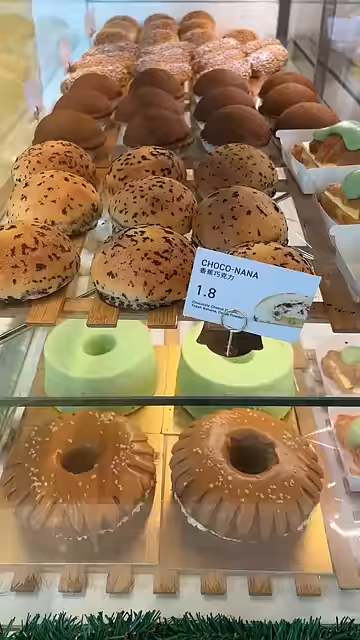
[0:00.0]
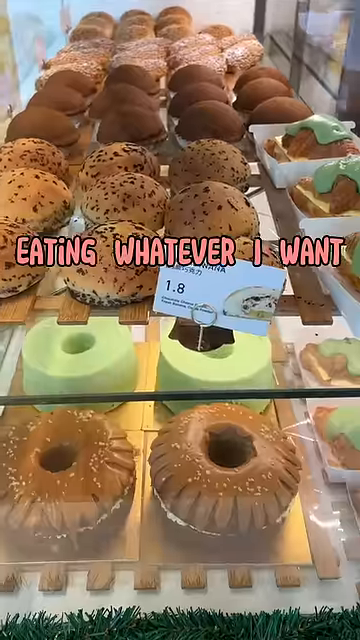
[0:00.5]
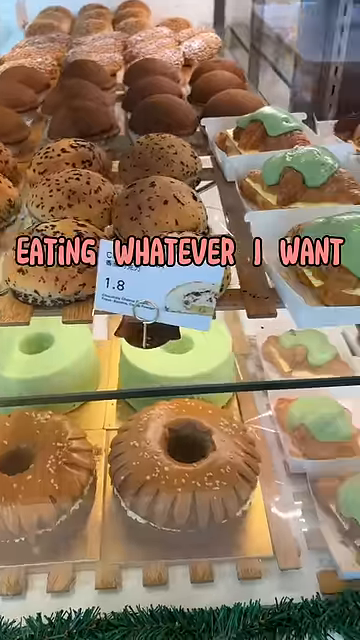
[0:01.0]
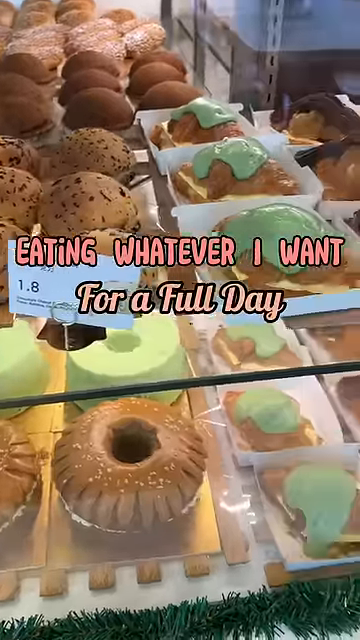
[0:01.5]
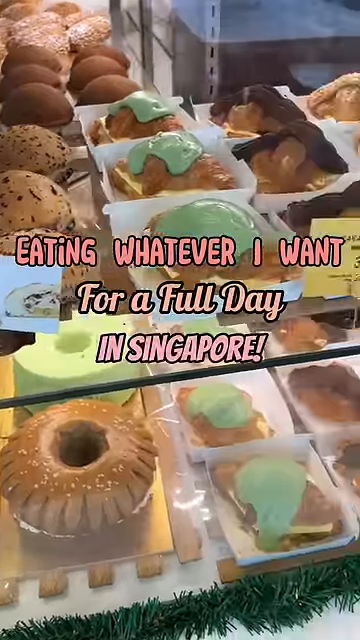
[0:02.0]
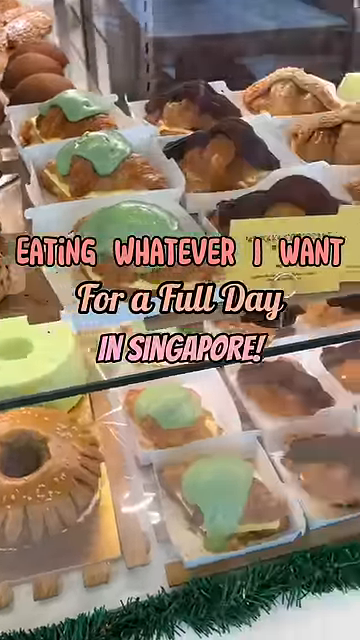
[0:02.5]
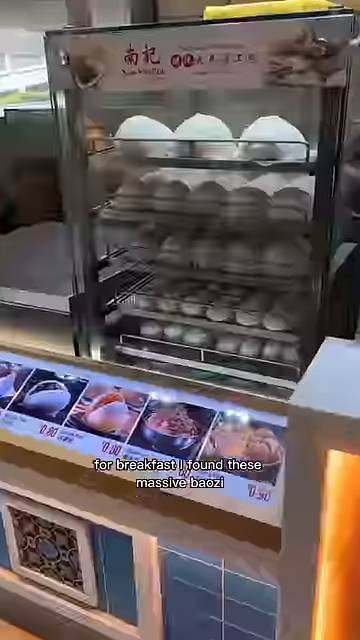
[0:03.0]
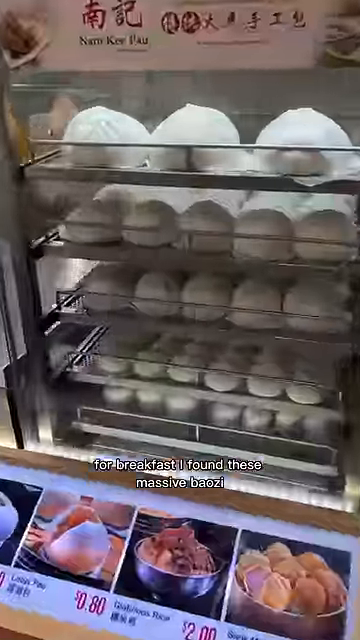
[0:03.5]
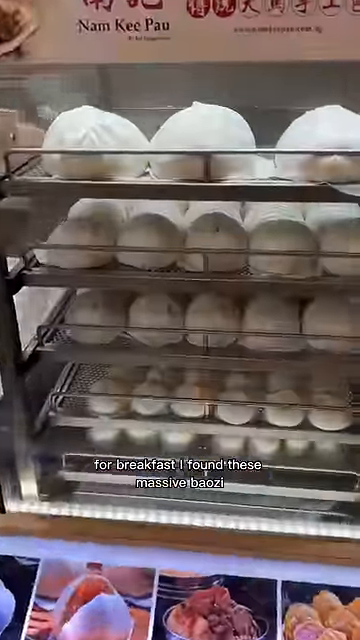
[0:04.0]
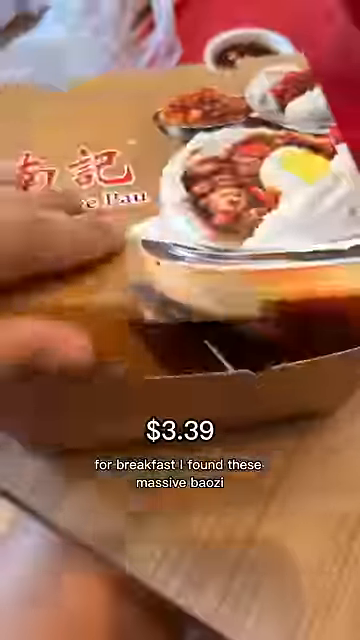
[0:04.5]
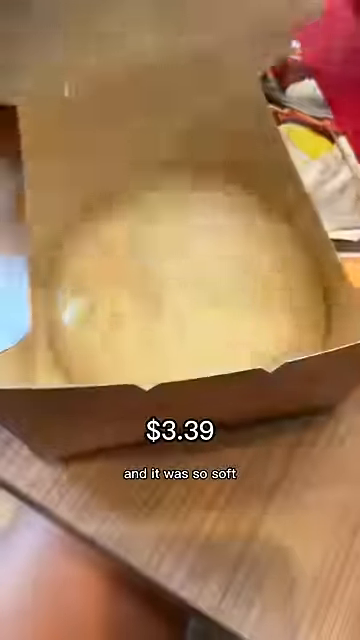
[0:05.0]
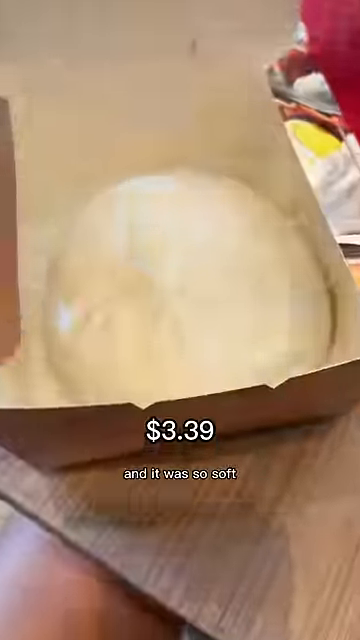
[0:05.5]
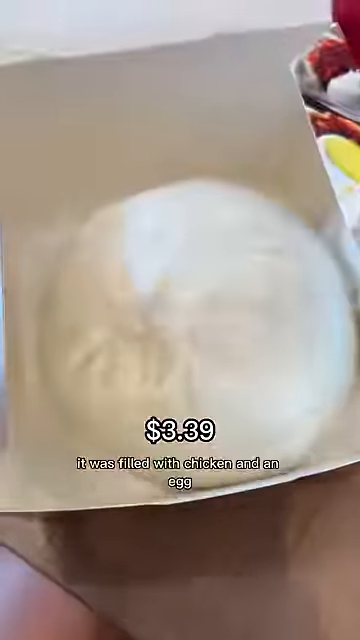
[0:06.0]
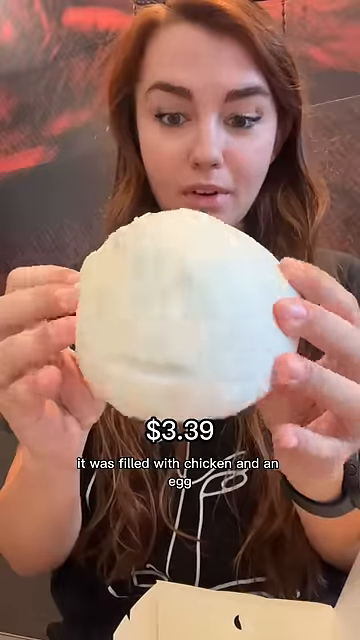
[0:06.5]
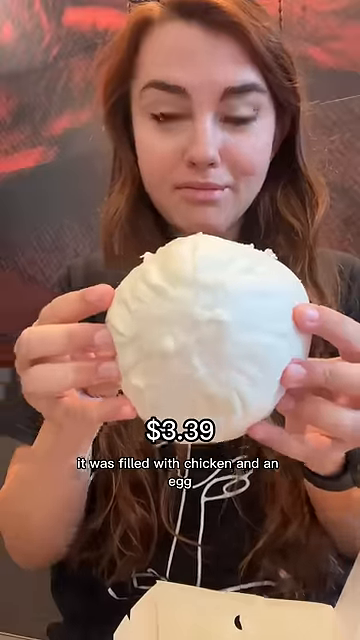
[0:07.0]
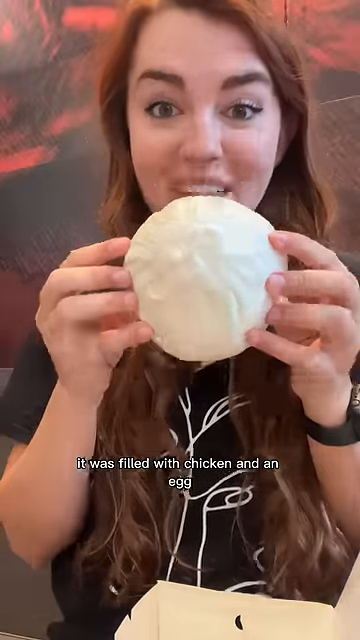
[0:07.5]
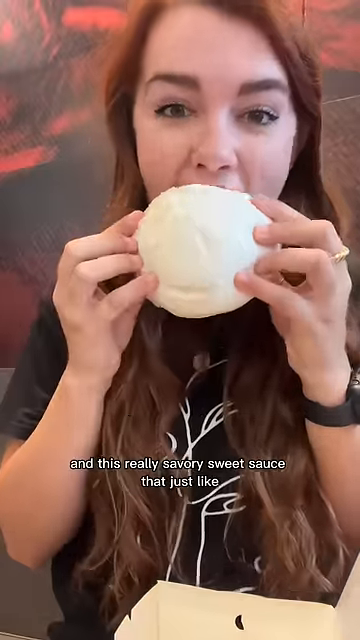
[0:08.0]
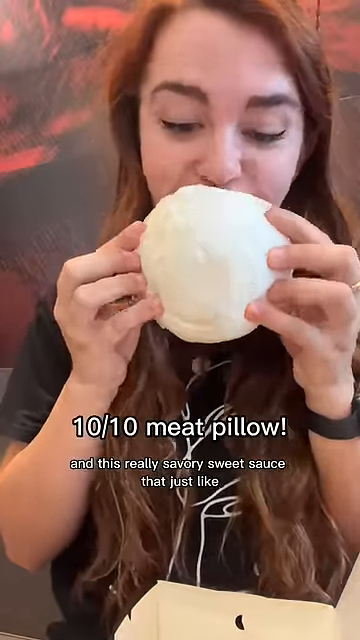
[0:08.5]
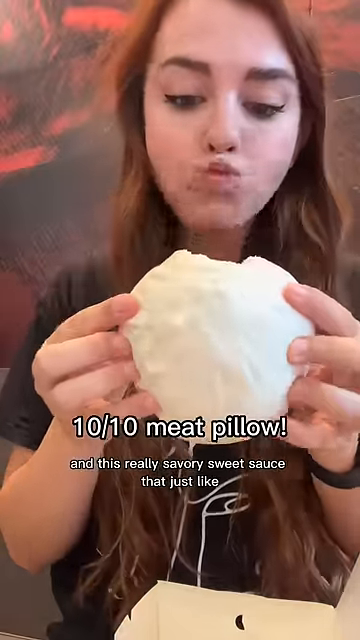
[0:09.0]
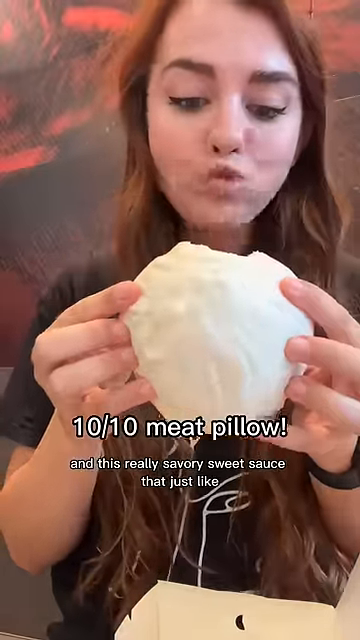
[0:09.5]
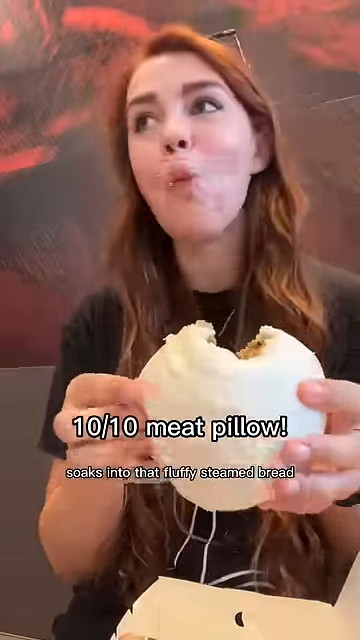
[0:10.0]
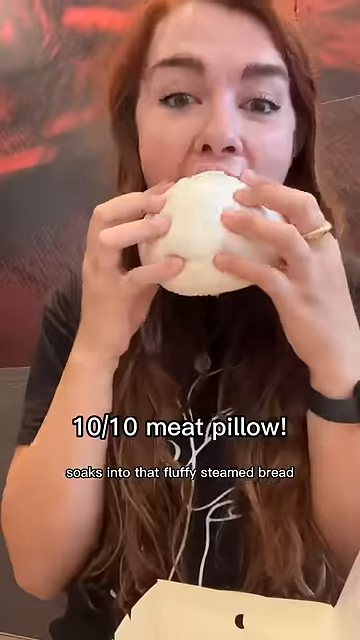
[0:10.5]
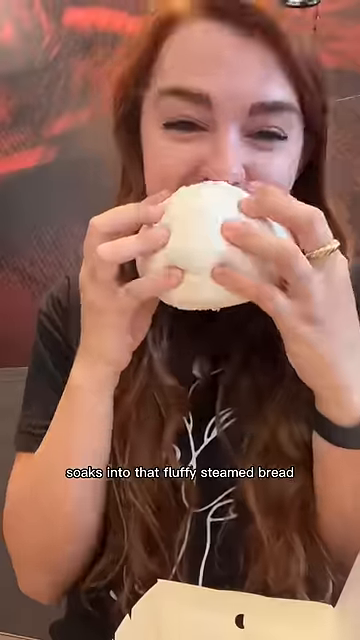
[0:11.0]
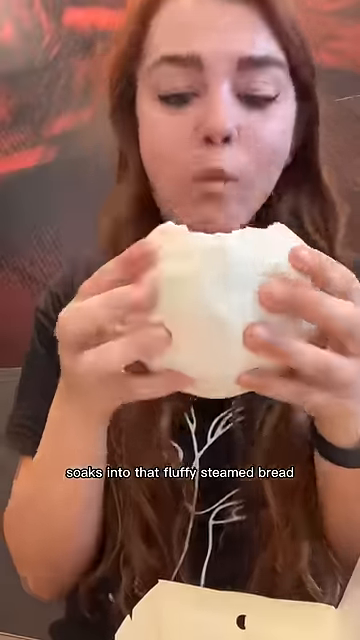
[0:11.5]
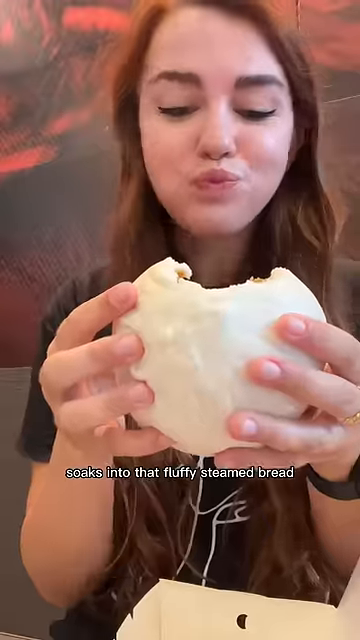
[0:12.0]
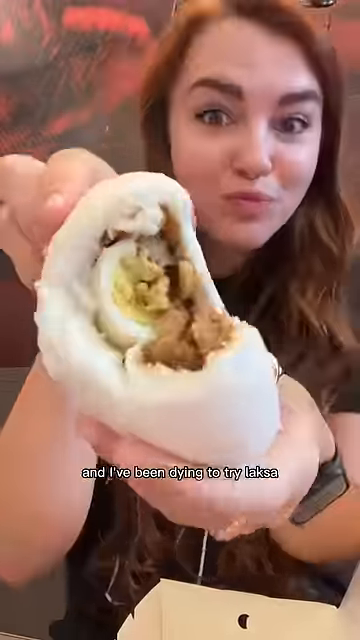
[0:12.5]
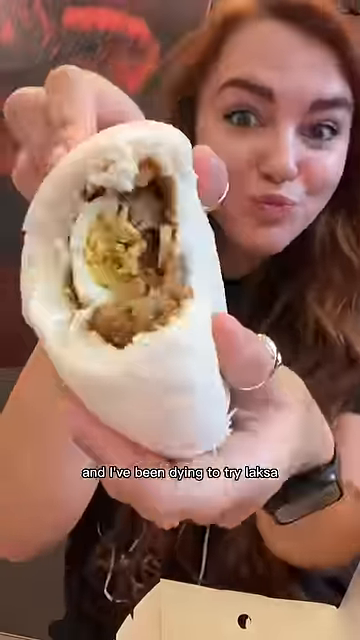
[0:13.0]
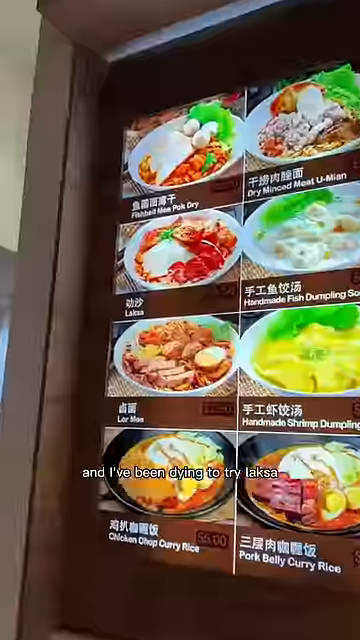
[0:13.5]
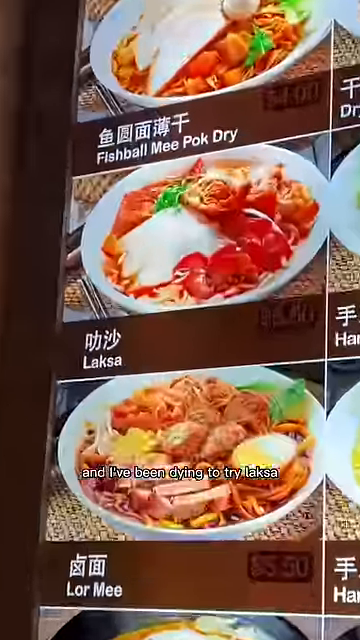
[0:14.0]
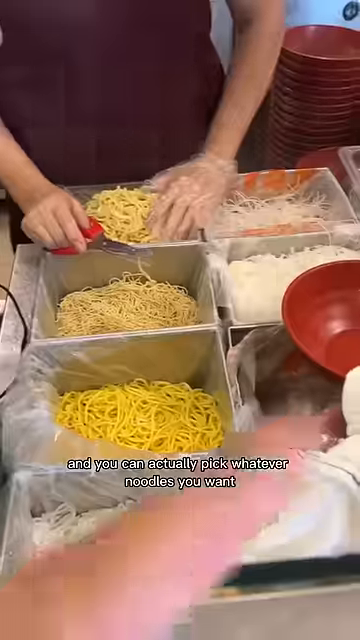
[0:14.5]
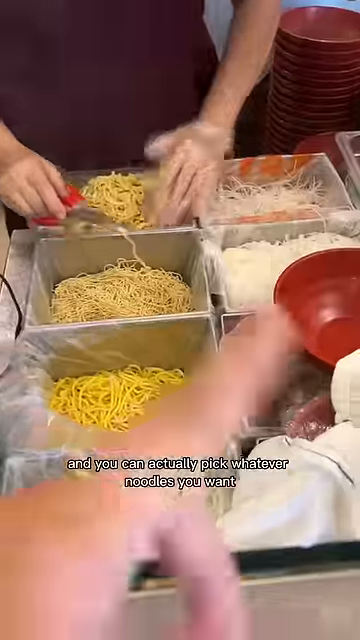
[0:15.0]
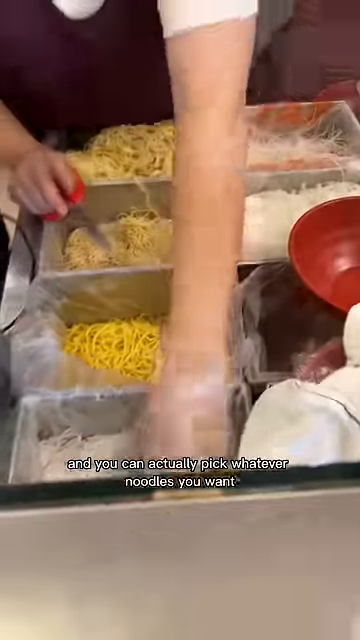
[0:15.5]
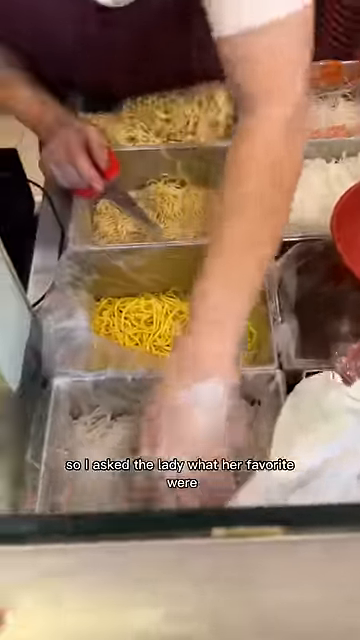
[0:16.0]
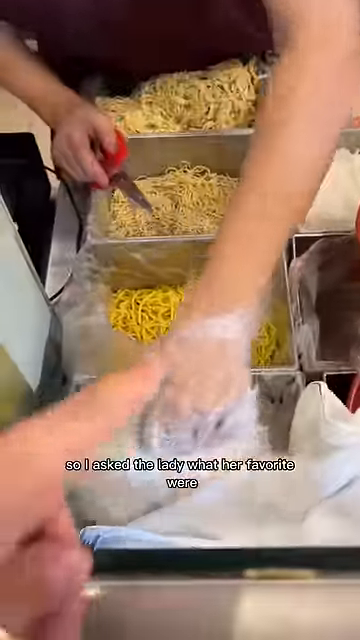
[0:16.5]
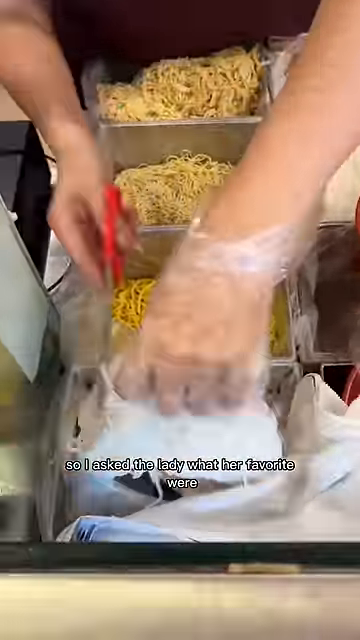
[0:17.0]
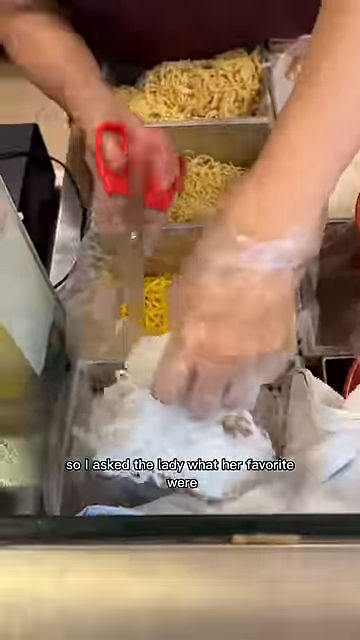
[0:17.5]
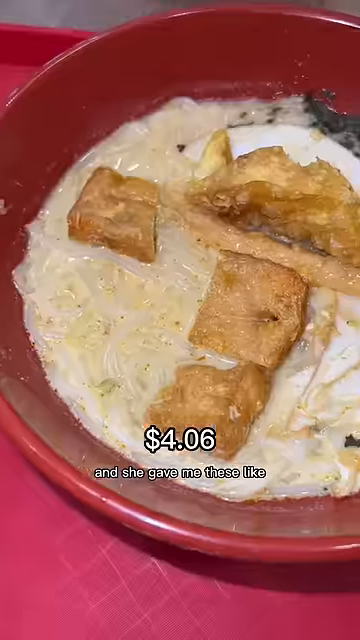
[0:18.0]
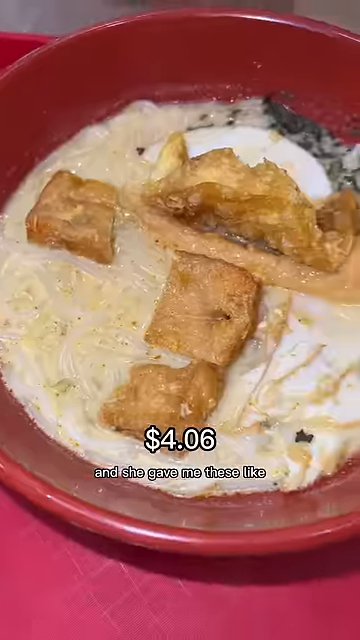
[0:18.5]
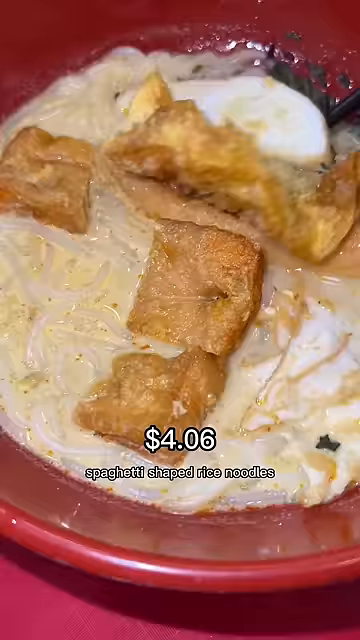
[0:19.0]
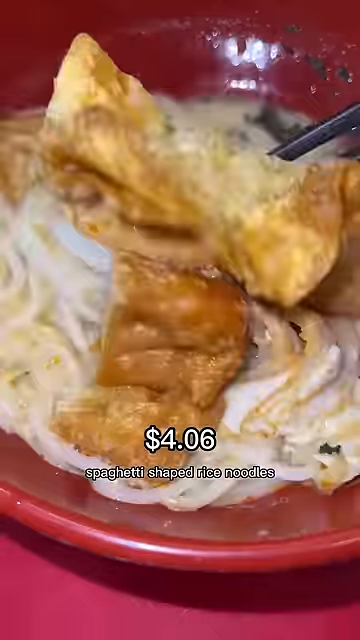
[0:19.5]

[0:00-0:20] On-screen text seems to read "eating whatever I want for a full day," though the text moves too fast to read every part of it. A young woman who seems fairly fit is in Singapore. The food includes a chicken and egg filled meat pillow, which is a fluffy steamed bun, and some kind of noodle or ramen dish. One of the two dishes is called laksa, but it is unclear whether it is the noodle dish or the bun.